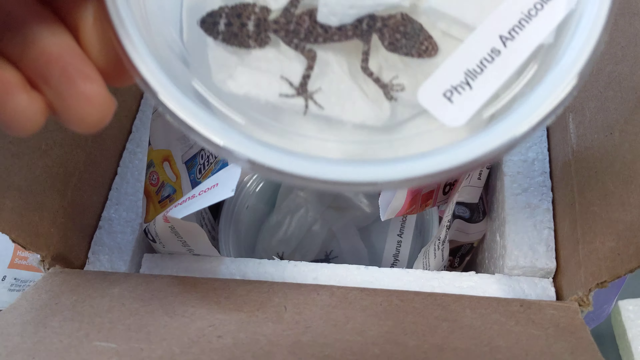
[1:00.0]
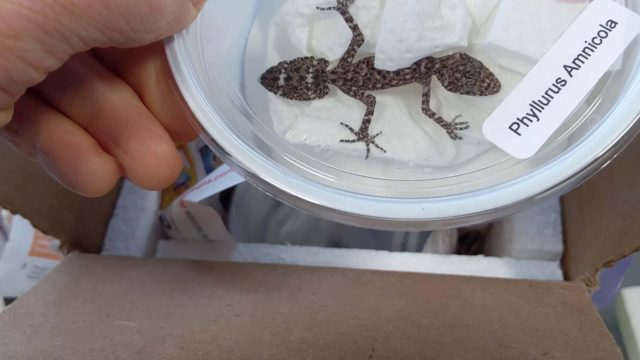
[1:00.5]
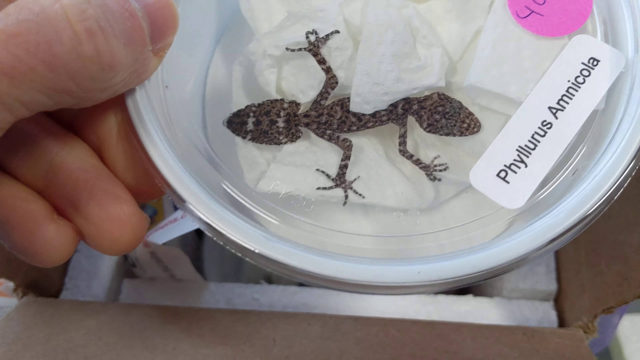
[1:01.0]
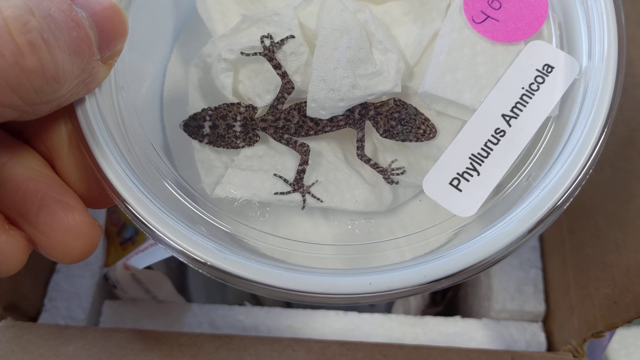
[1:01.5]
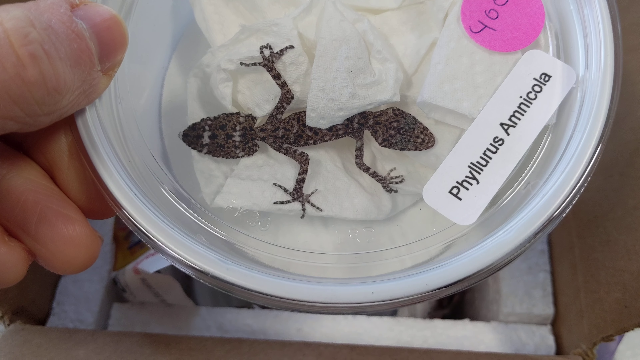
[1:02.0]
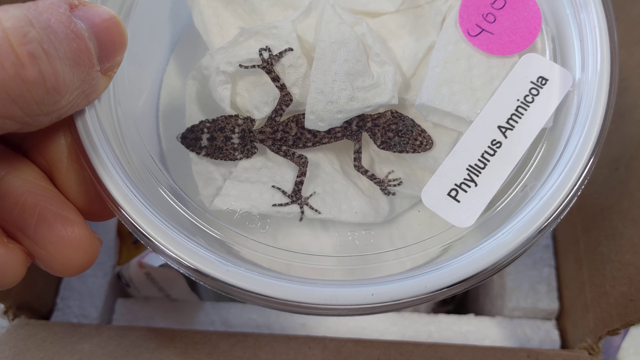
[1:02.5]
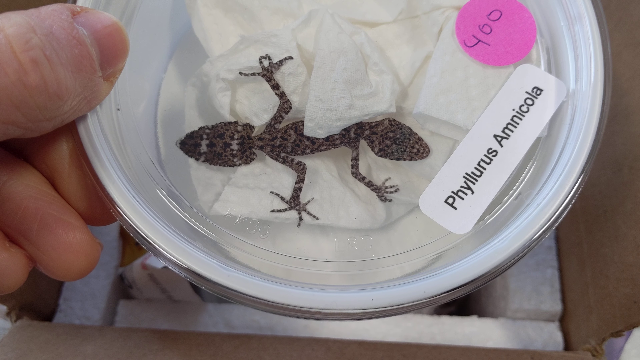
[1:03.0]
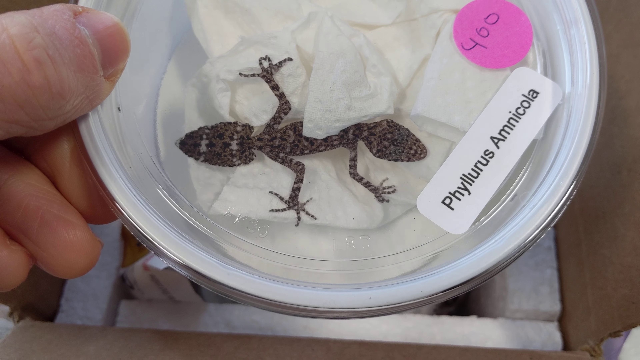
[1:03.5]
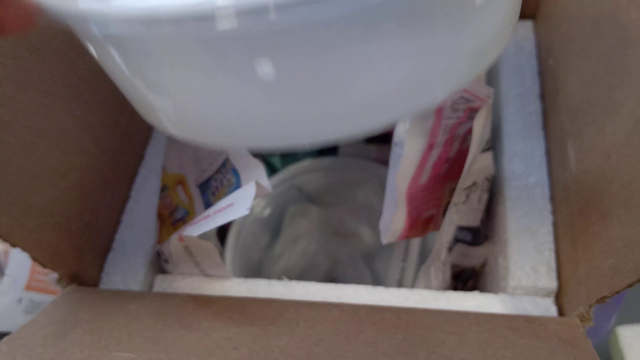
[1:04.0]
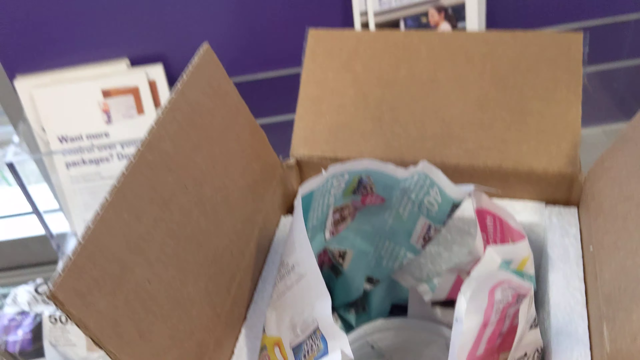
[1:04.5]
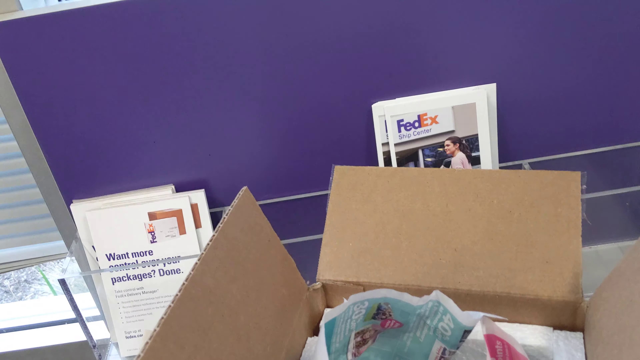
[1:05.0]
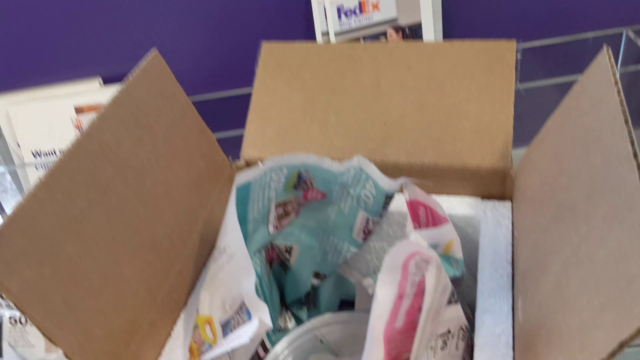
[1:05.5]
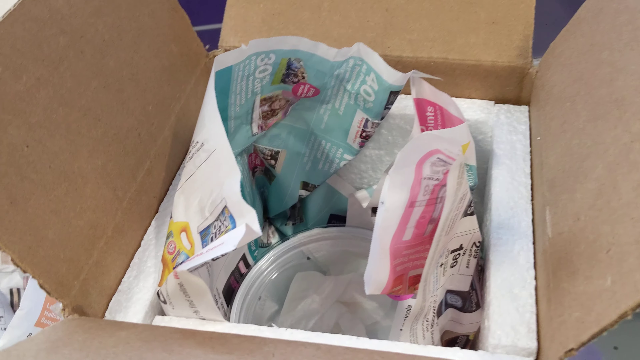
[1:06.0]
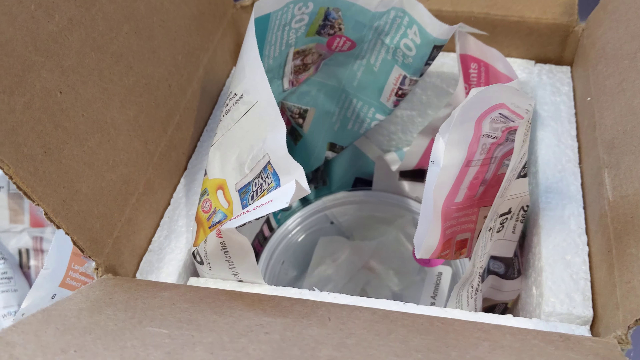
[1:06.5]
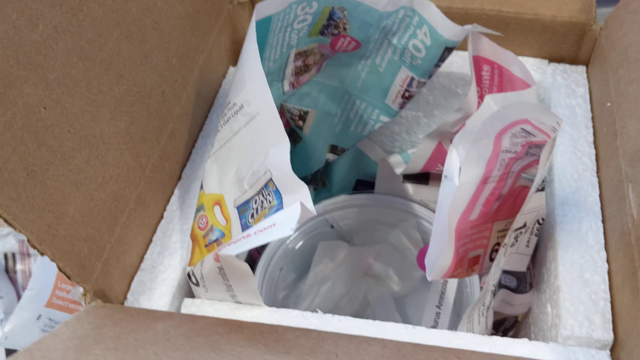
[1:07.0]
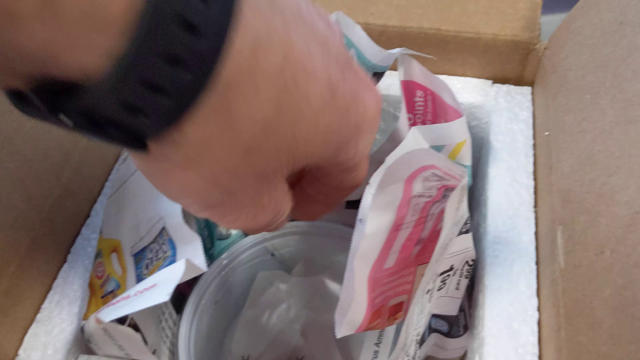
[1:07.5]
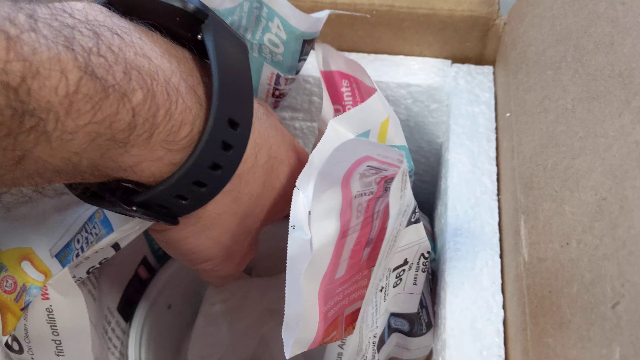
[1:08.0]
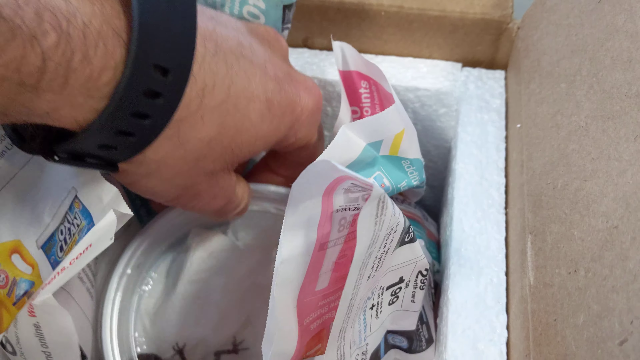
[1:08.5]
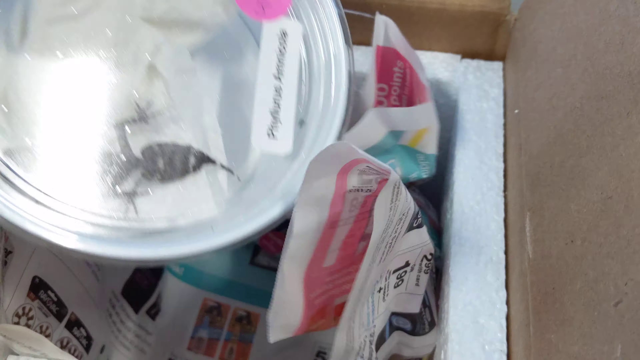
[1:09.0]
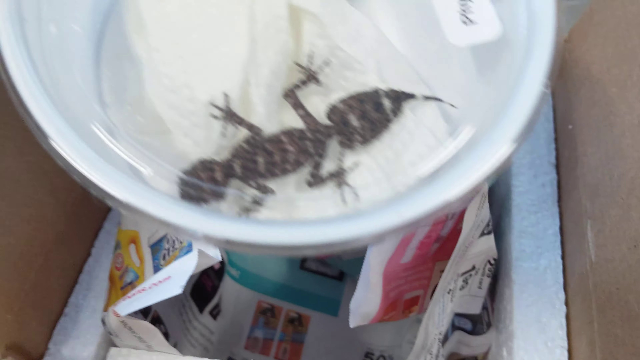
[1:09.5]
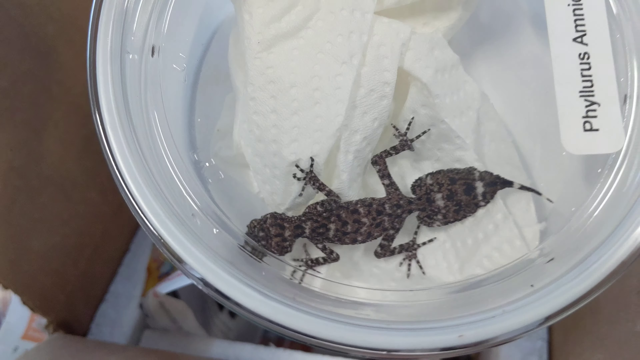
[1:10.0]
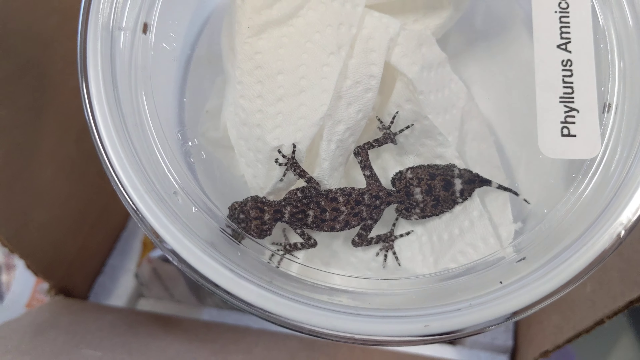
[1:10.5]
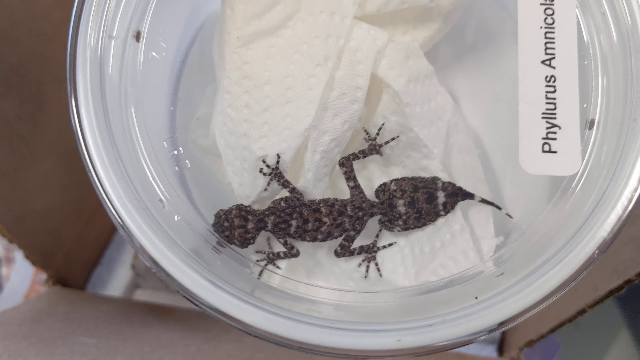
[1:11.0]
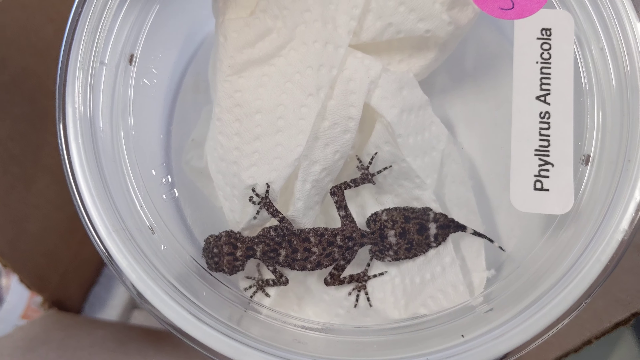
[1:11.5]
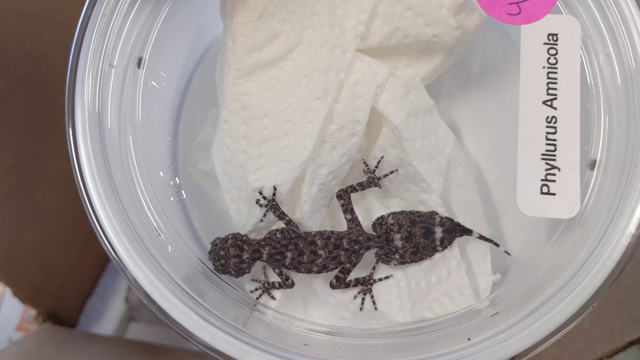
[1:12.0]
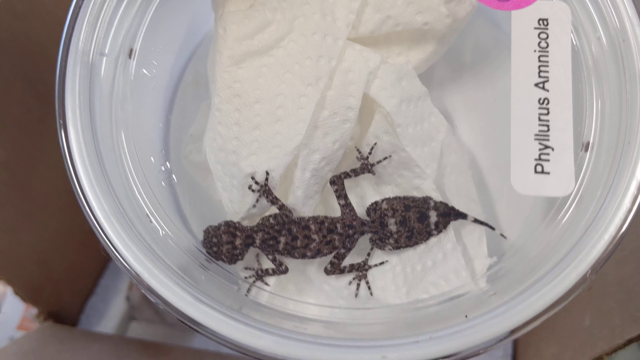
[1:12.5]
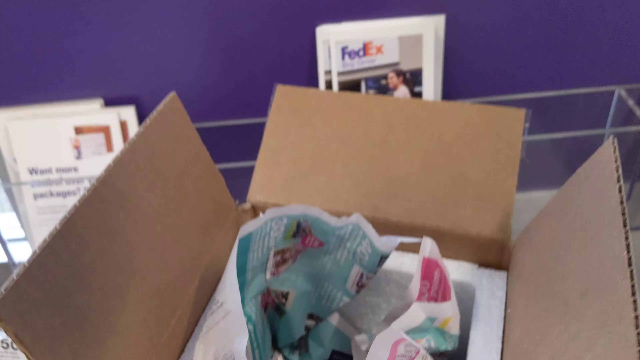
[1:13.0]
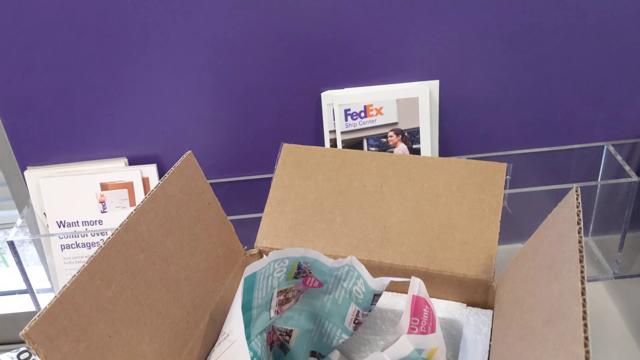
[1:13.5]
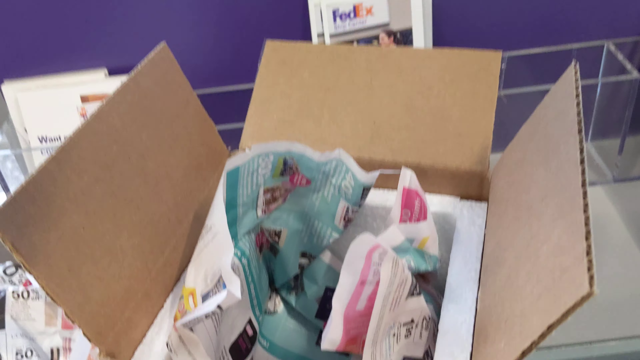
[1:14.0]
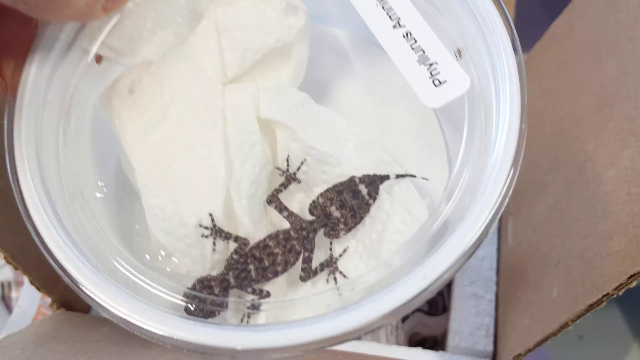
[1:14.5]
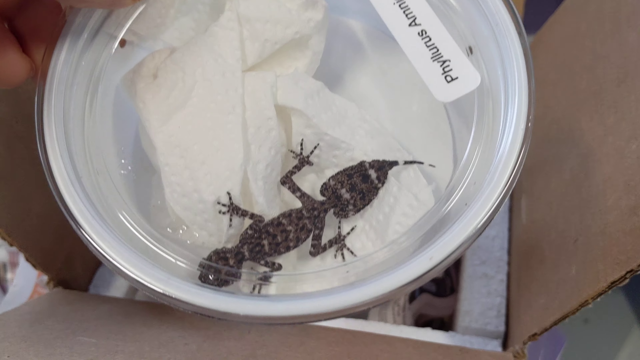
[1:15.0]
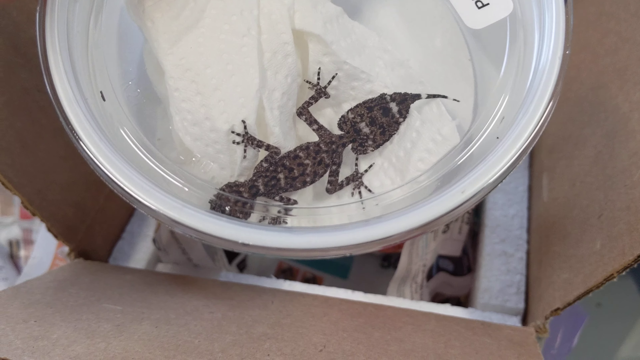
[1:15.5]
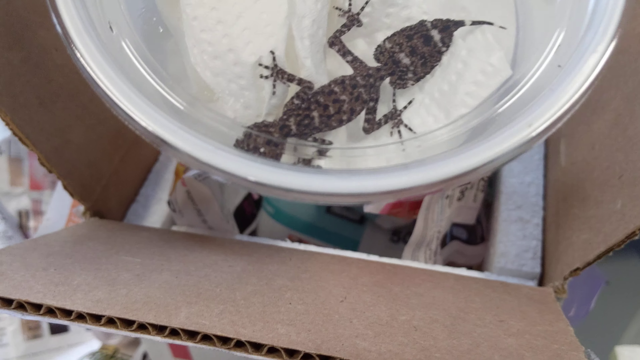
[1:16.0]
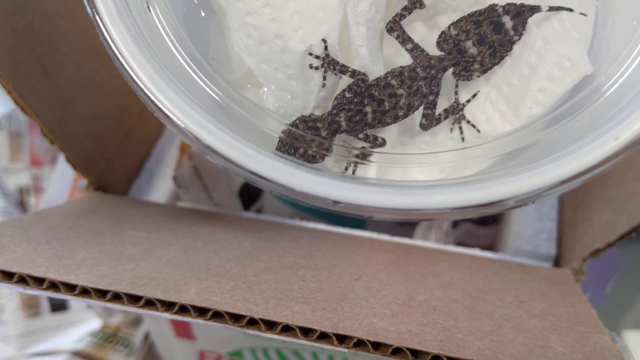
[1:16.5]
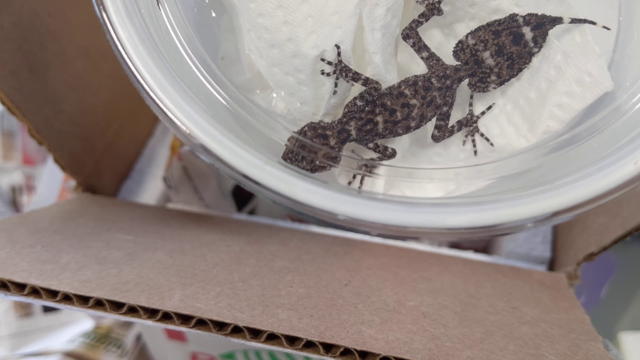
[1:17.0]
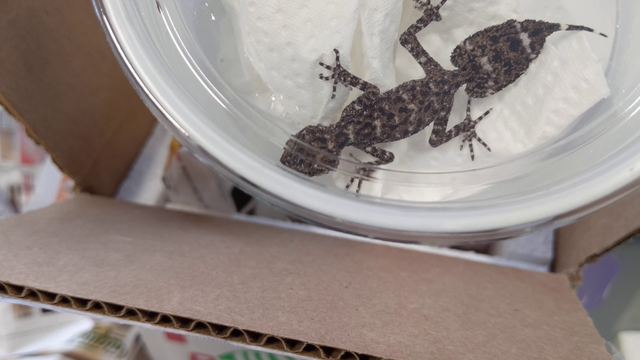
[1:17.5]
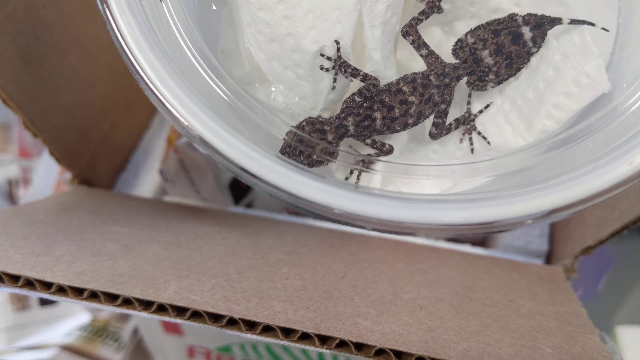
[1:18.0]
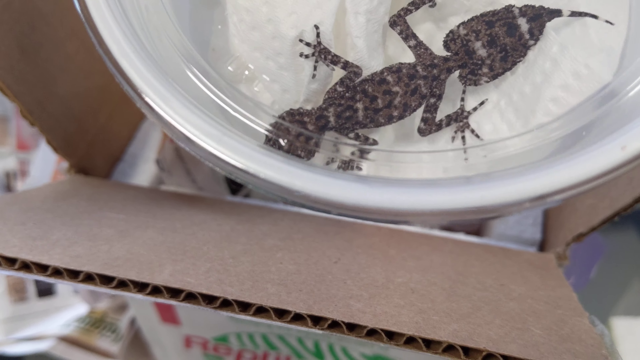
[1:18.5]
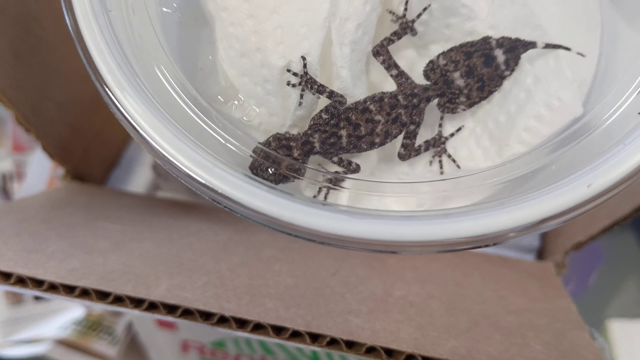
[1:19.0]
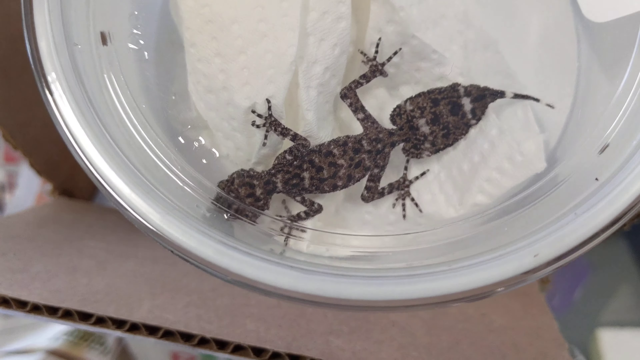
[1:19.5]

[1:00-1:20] The tub with the Phyllurus Amnicola inside is seen more closely. There looks to be some white tissue at the bottom of the tub, with the little amphibian sat on top of it. The tub is not much bigger than the hand that removes it from the box. The sticker on the tub looks like it says "400", handwritten, and the name Phyllurus Amnicola is on a printed oblong sticker. Holding the tub in their left hand, the person moves it up and away and places it out of shot. As they do, the camera lifts, showing some leaflets in the background behind the box; the one directly behind the box says "FedEx". The camera looks back into the box, and a left hand reaches in to collect another tub from within the paper lining the box. More polystyrene blocks, similar to the one removed earlier, also line the box. The hand has a black plastic-strapped watch on its wrist, and the arm has dark hairs on it, suggesting the person is apparently a man. He brings out the other tub and lifts it closer to the camera to show another of the amphibians inside. This tub also has the Phyllurus Amnicola label and a pink round sticker, which is only just seen in the shot. He lifts the tub away and out of shot, then brings it back in, moving it from the top of the screen toward the bottom to show the amphibian a little closer to the camera.